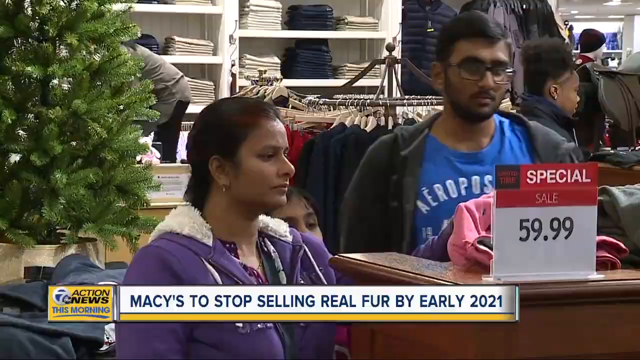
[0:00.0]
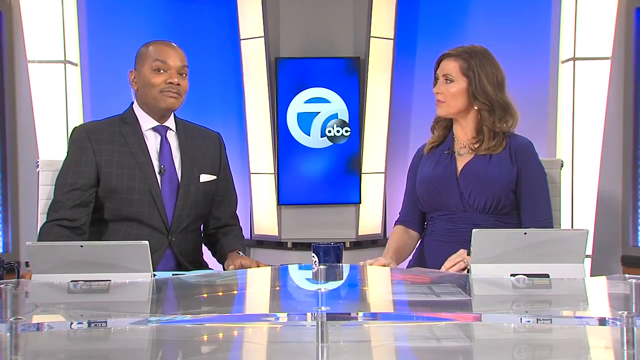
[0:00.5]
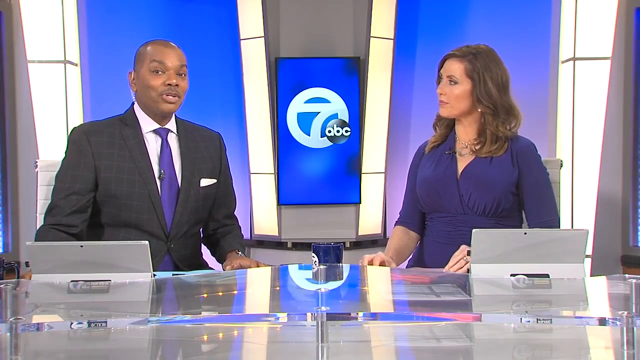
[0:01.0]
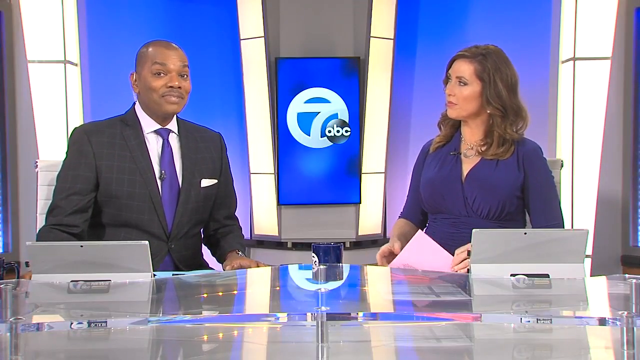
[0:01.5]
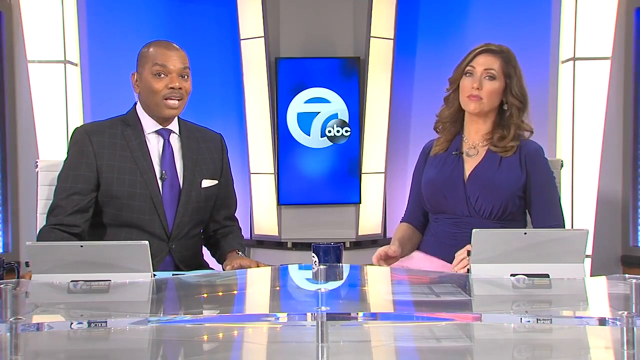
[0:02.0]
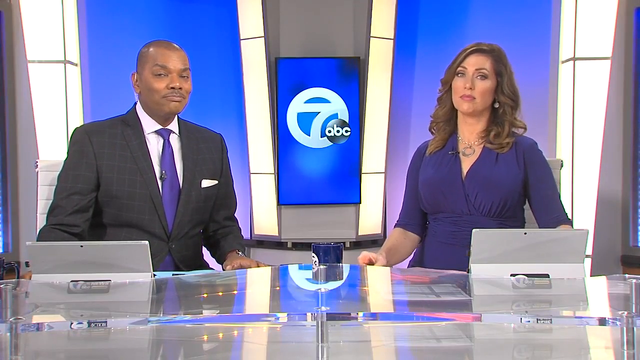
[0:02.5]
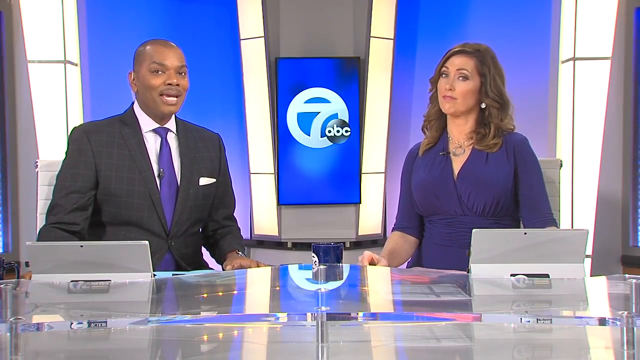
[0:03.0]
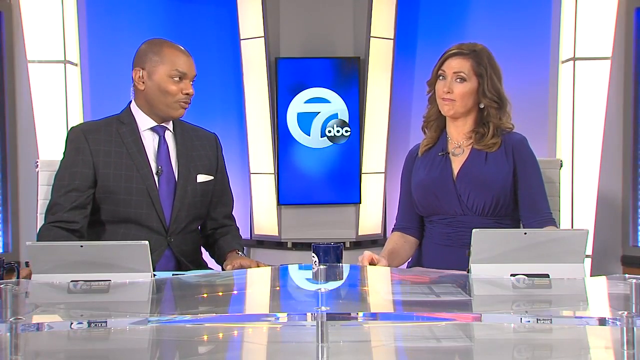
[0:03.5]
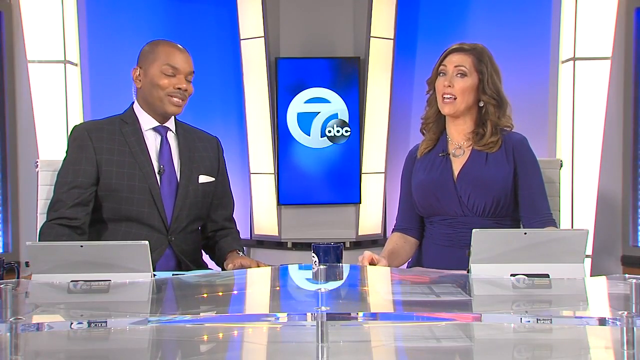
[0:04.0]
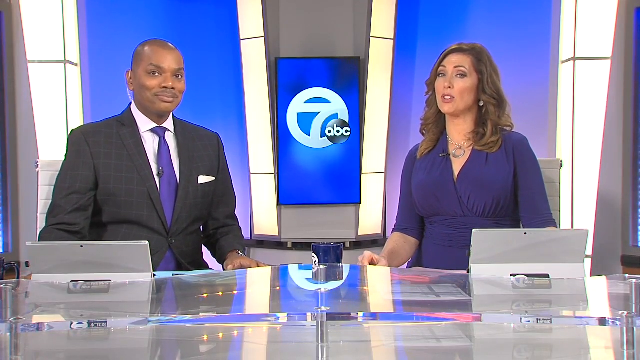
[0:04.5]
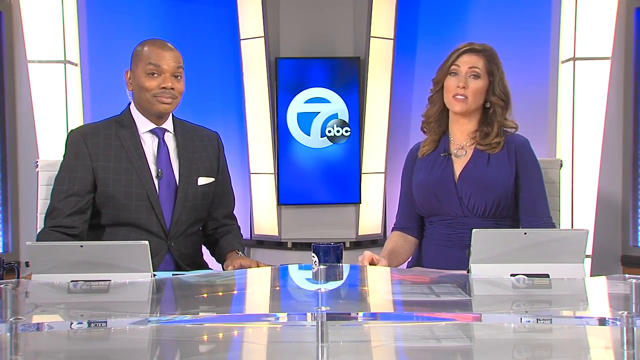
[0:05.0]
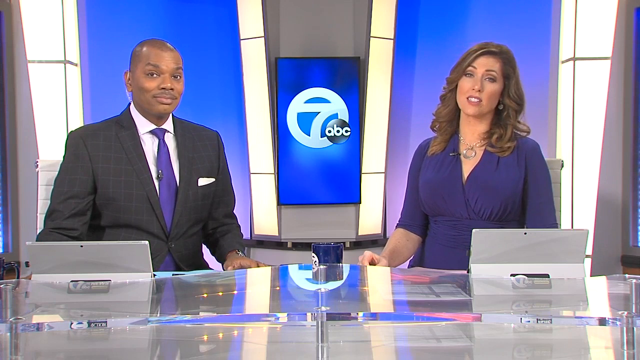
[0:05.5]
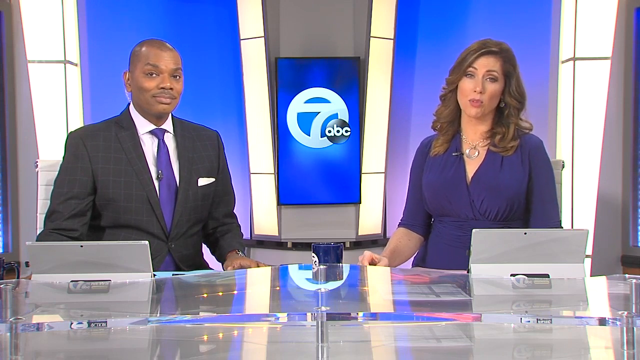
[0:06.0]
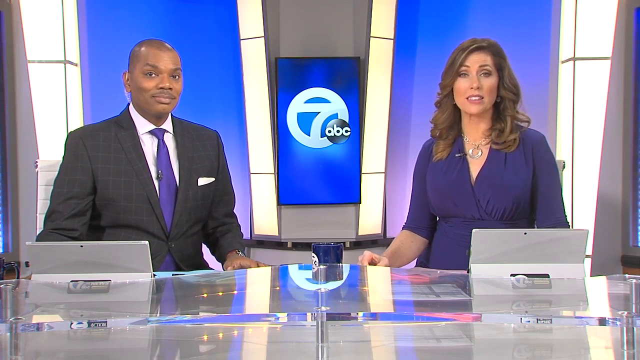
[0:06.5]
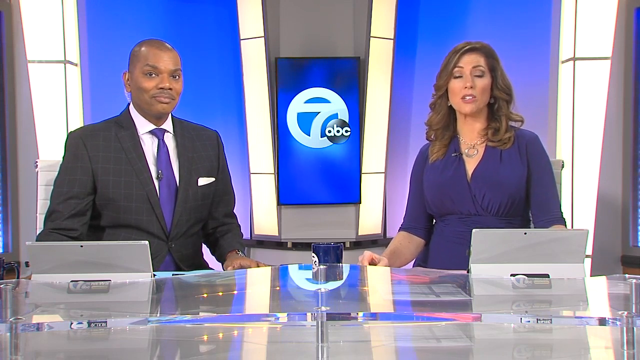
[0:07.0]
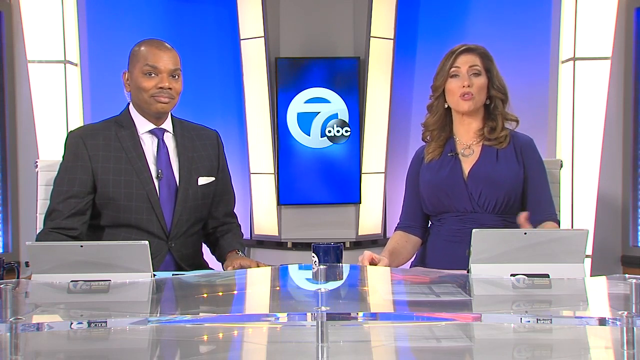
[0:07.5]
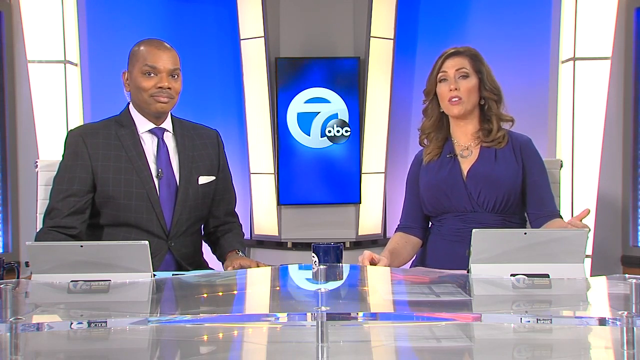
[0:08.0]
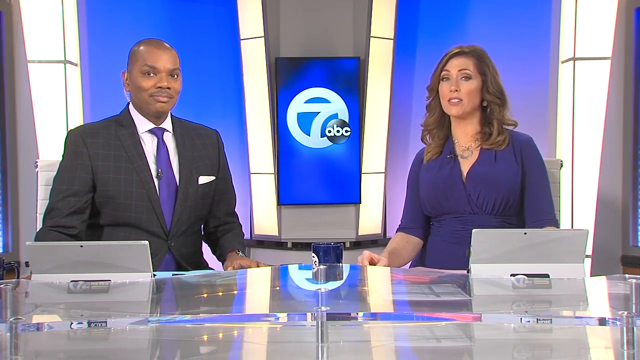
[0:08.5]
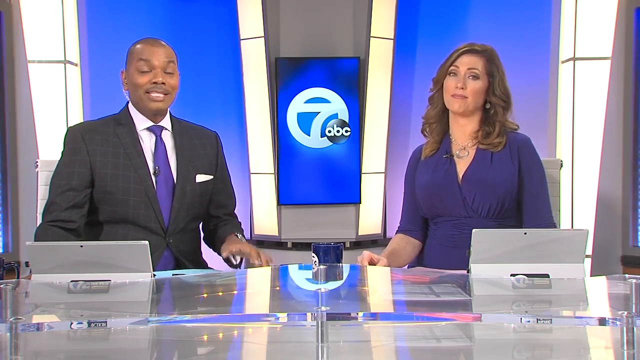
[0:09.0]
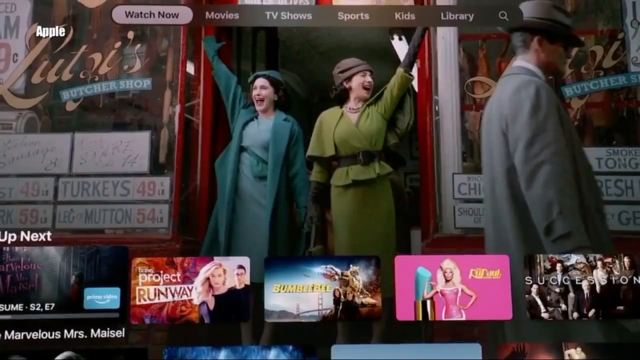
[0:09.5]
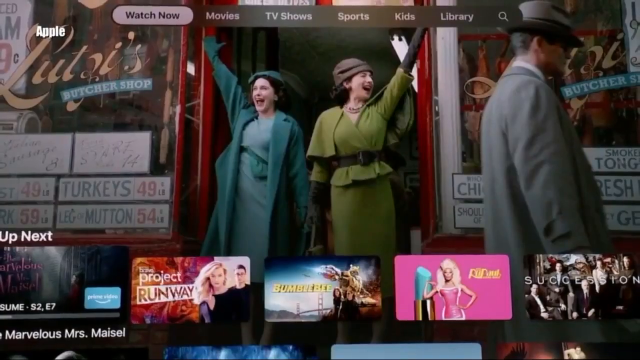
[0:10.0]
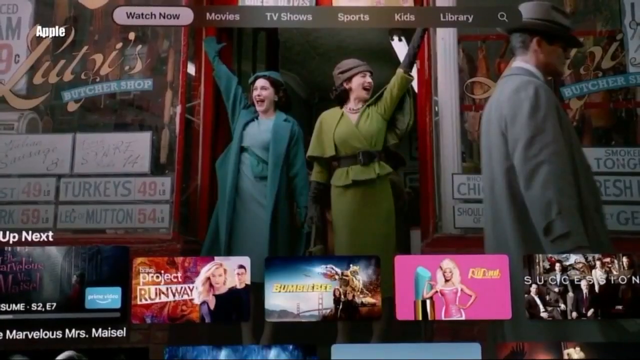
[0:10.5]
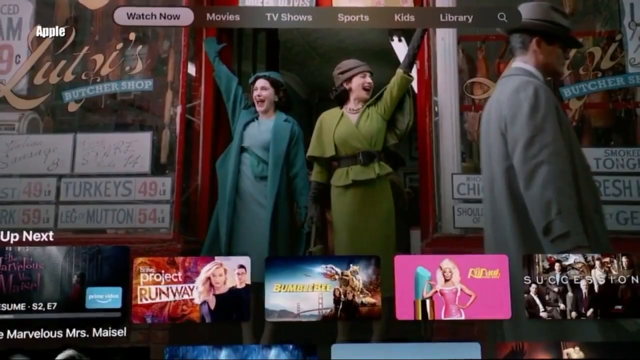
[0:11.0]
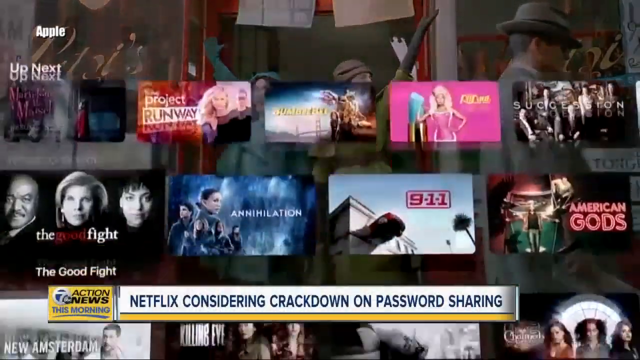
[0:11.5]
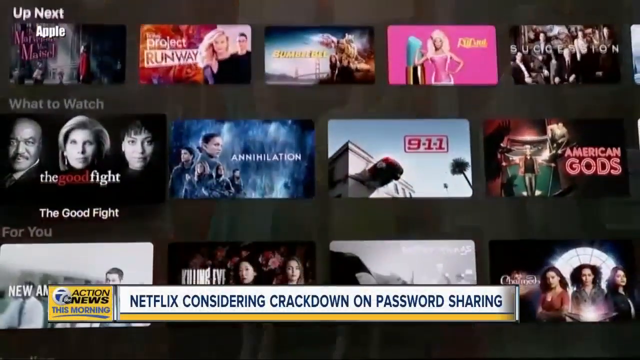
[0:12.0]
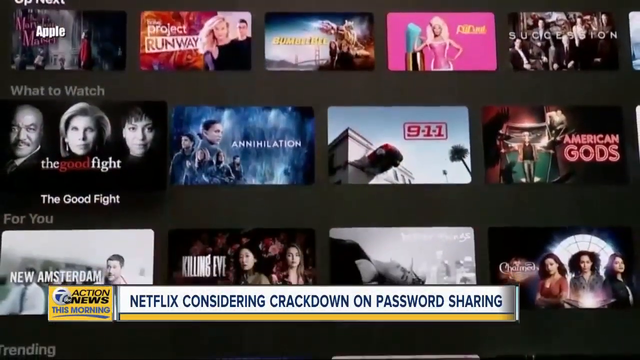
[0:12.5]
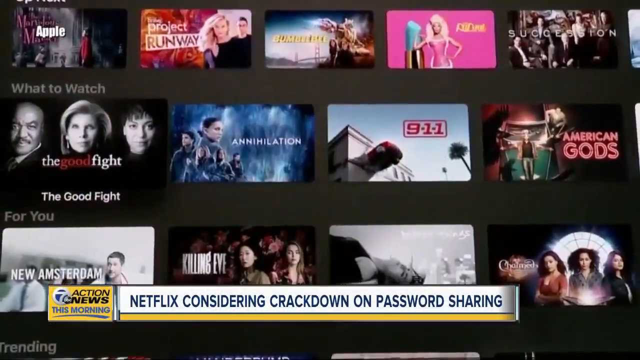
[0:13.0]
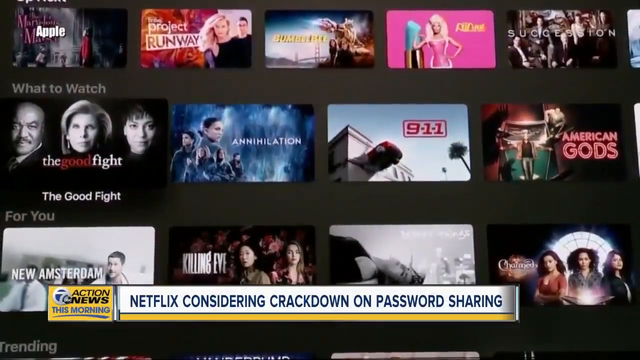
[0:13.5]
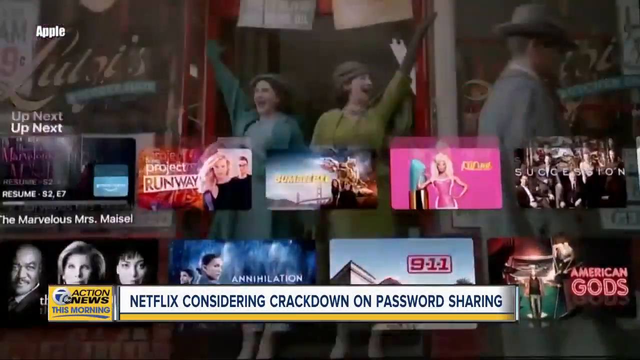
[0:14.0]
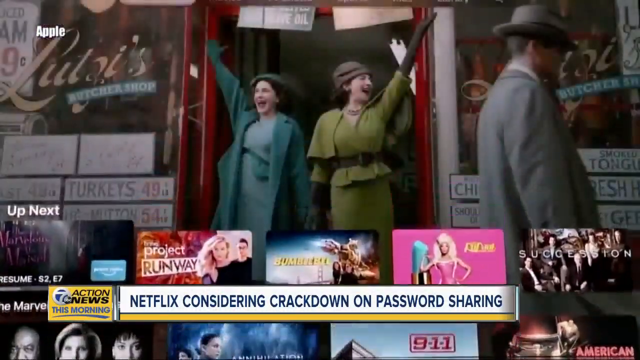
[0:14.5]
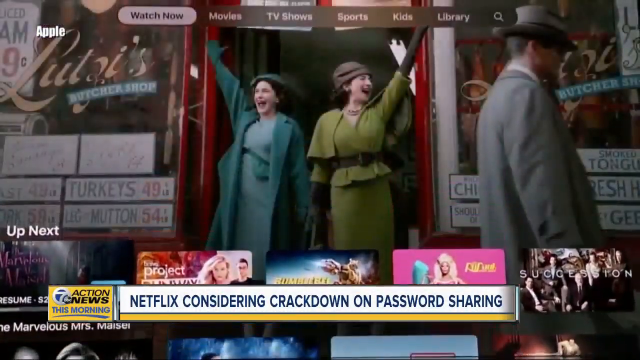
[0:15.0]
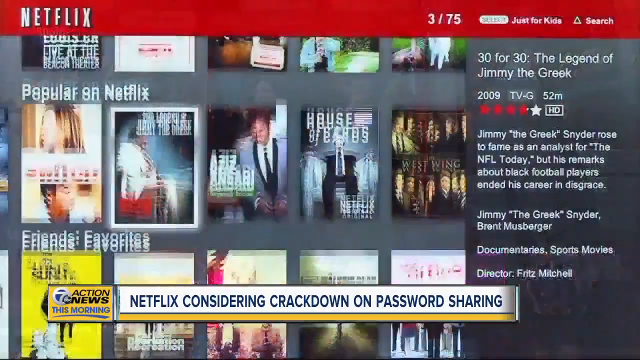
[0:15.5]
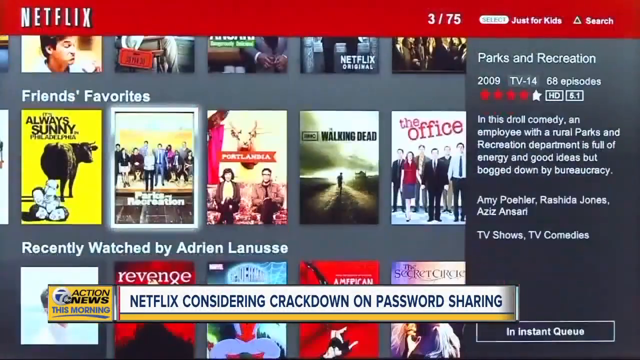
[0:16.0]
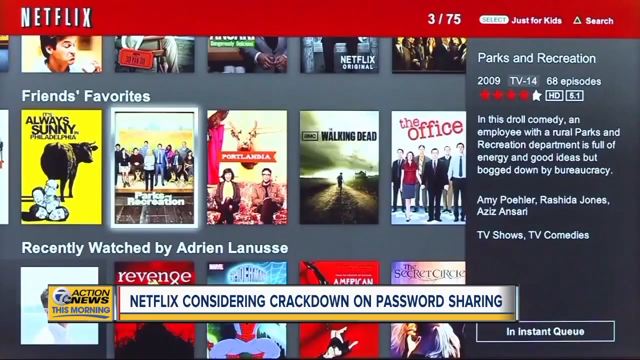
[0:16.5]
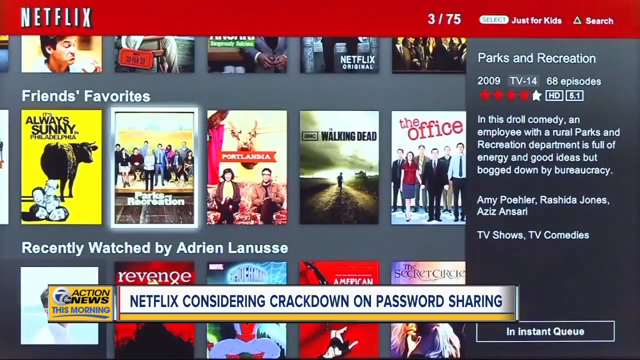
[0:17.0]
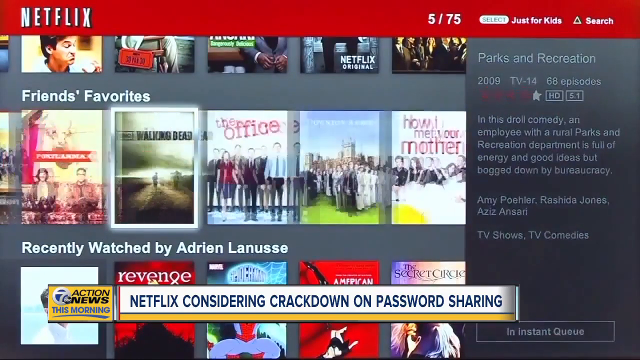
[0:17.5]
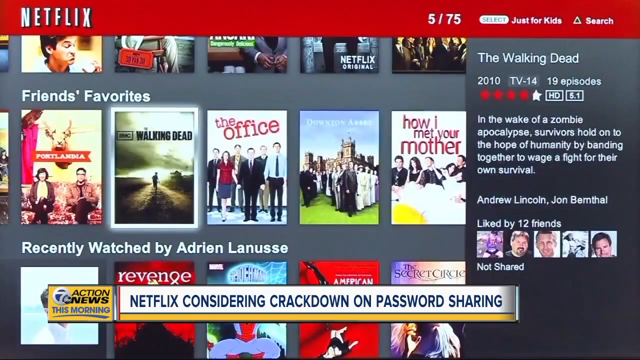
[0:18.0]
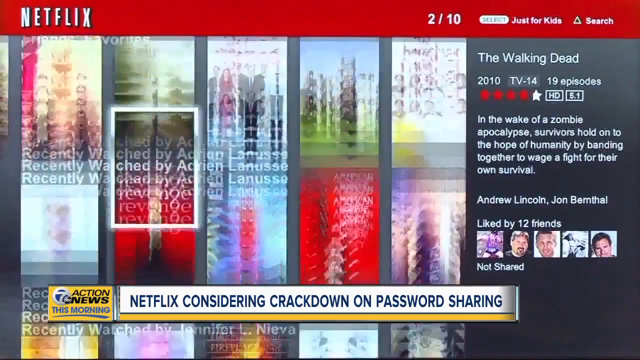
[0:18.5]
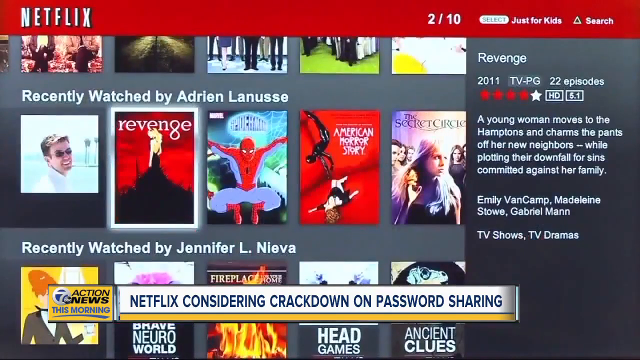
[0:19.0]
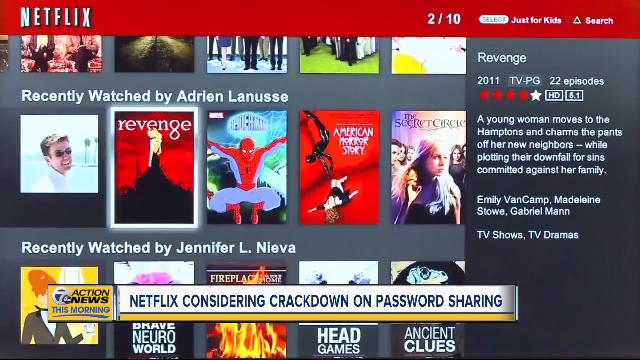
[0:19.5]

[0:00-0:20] Two newscasters from the ABC7 channel talk in a studio, both in full formal attire. The man on the left is of African descent and has no hair; he wears a black suit, a white shirt and a blue tie. The woman on the right wears a purple dress. The scene transitions to what seems to be an online streaming service, a starting page, where a number of titles are scrolled through. A heading from the news reads "Netflix considering crackdown on password sharing." An older Netflix interface appears, and a person scrolls through the different titles, including Spider-Man, The Office, How I Met Your Mother, the Revenge and The Secret Church. The scrolling continues through different famous titles.